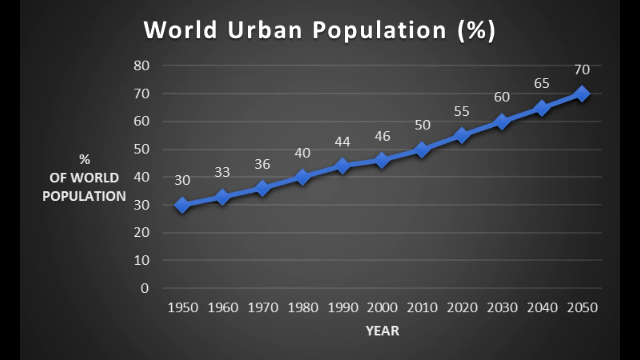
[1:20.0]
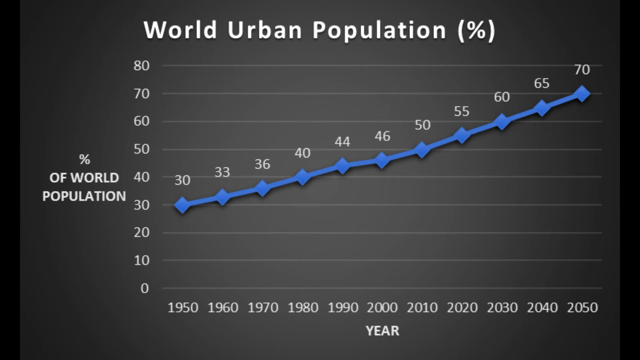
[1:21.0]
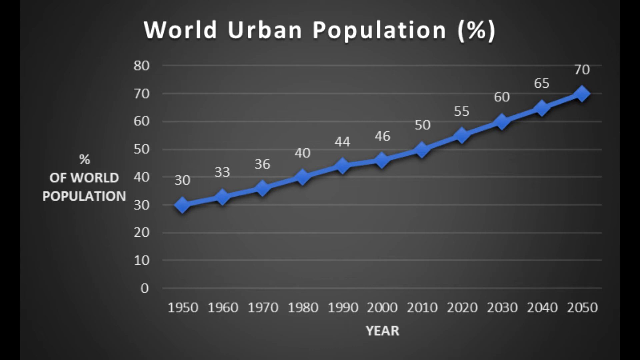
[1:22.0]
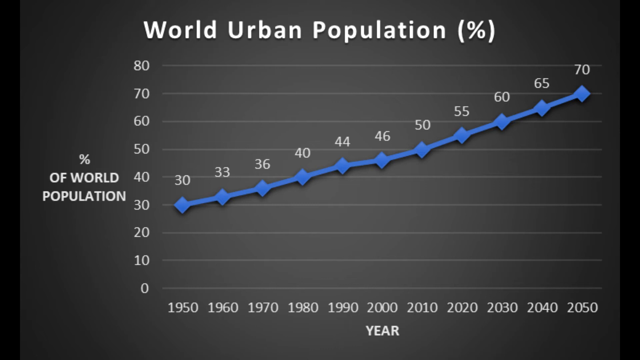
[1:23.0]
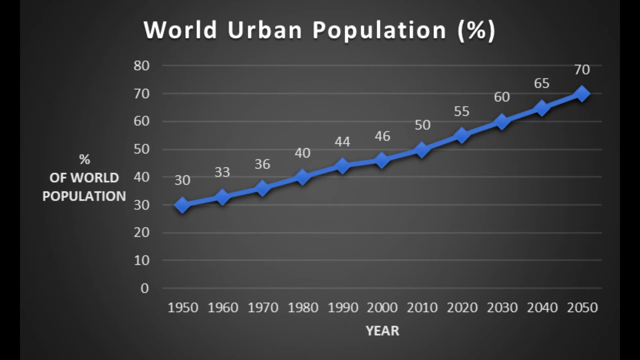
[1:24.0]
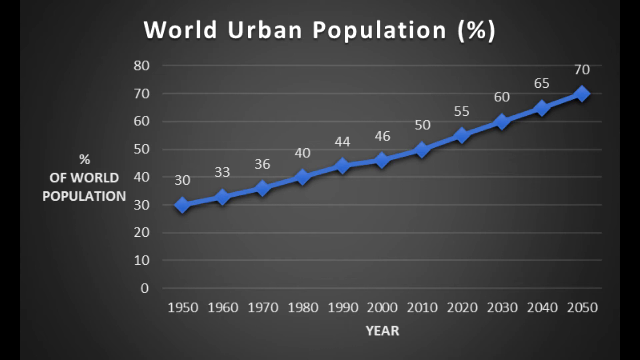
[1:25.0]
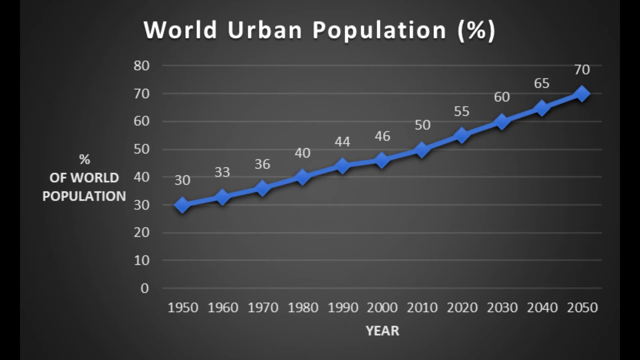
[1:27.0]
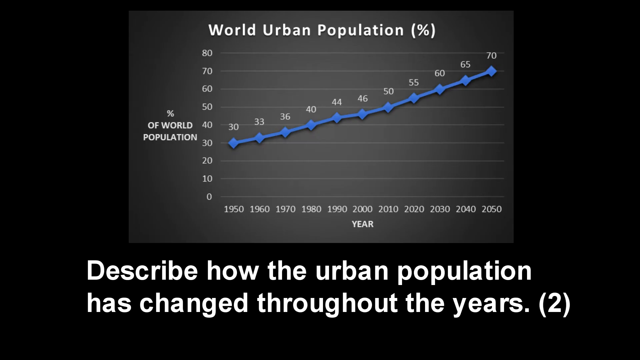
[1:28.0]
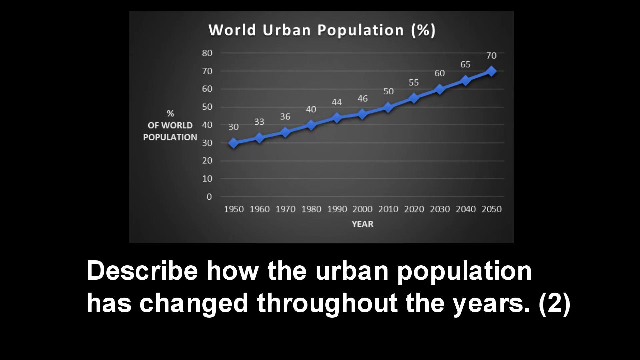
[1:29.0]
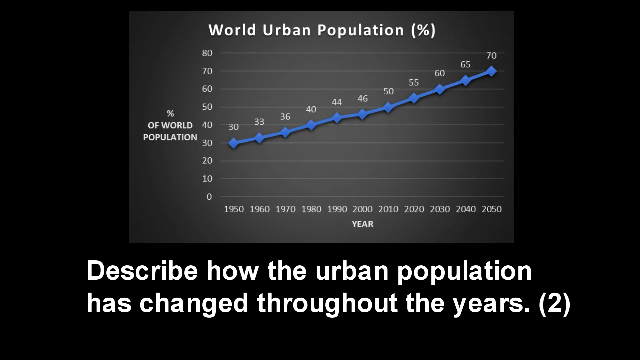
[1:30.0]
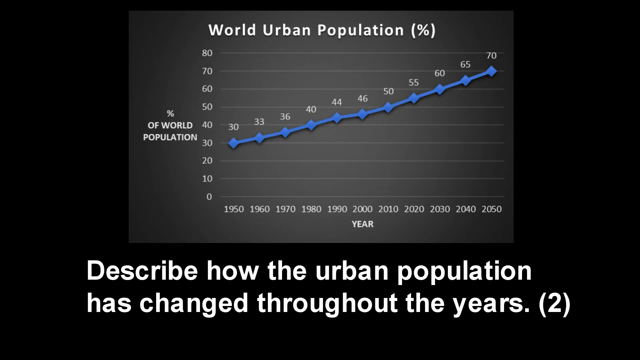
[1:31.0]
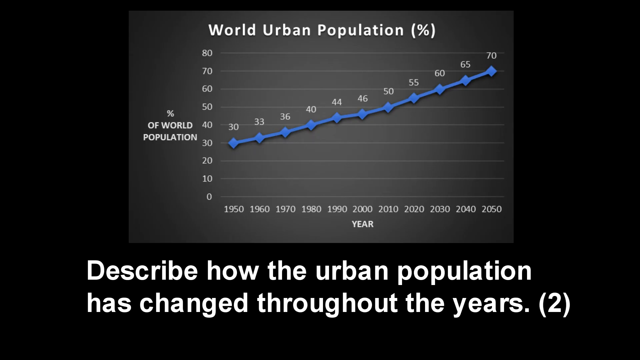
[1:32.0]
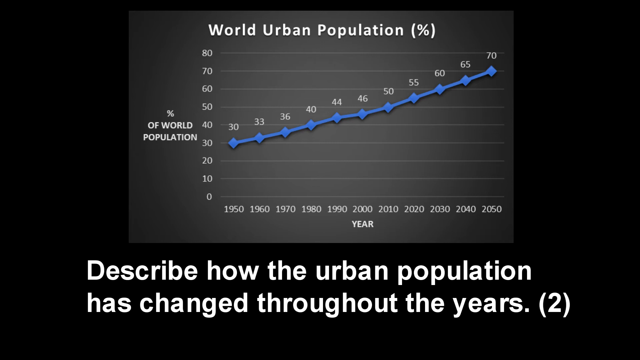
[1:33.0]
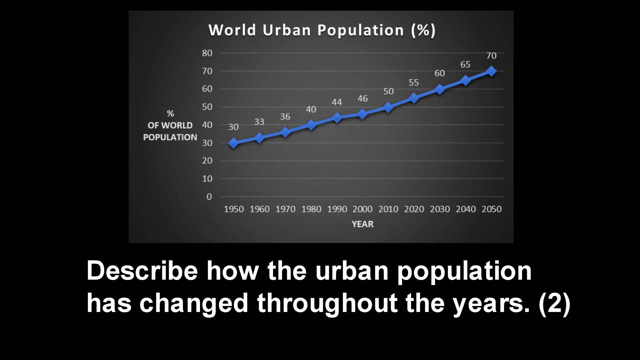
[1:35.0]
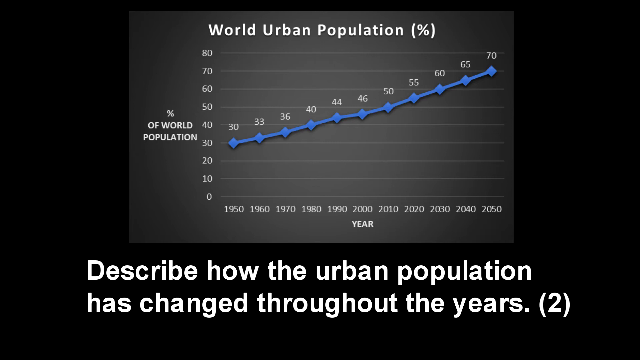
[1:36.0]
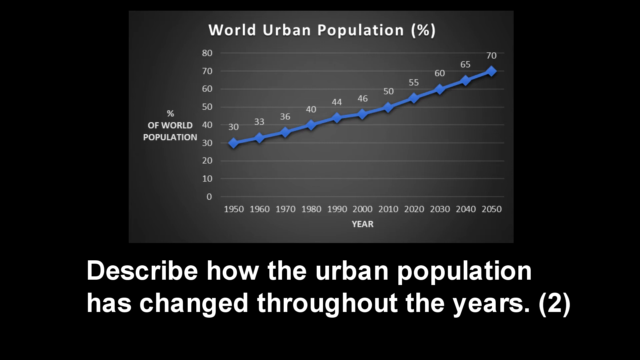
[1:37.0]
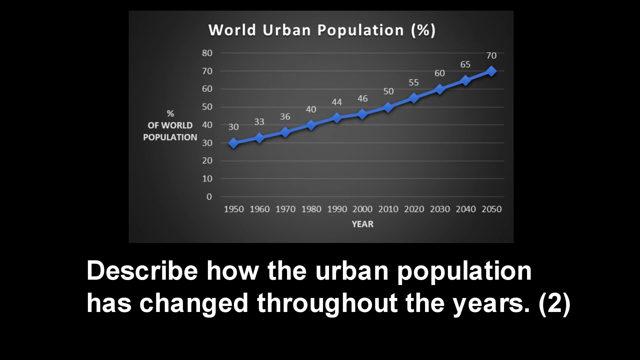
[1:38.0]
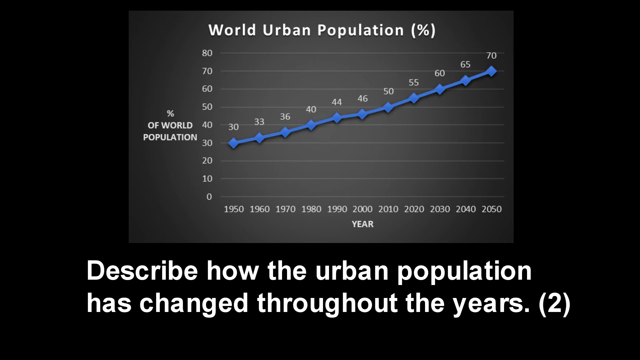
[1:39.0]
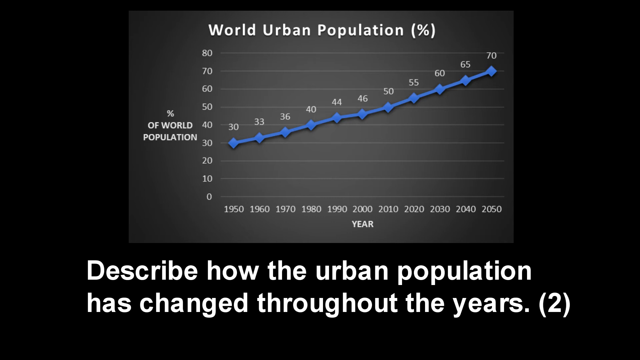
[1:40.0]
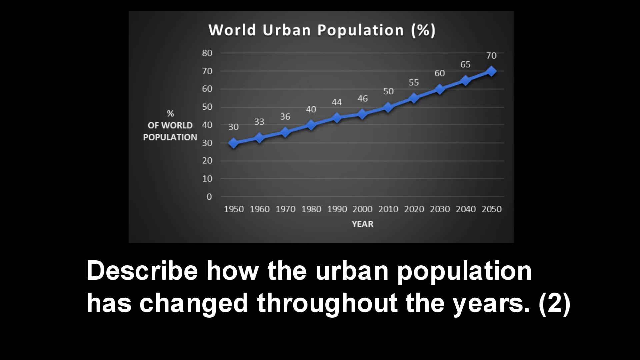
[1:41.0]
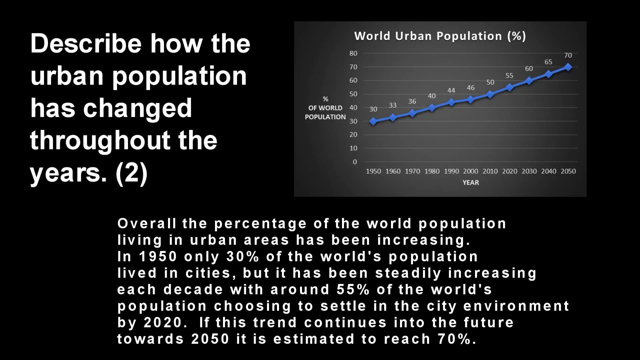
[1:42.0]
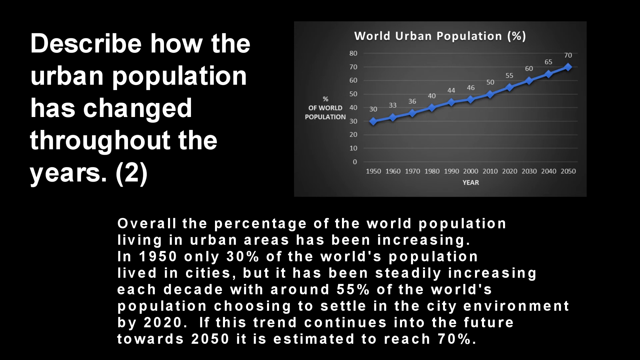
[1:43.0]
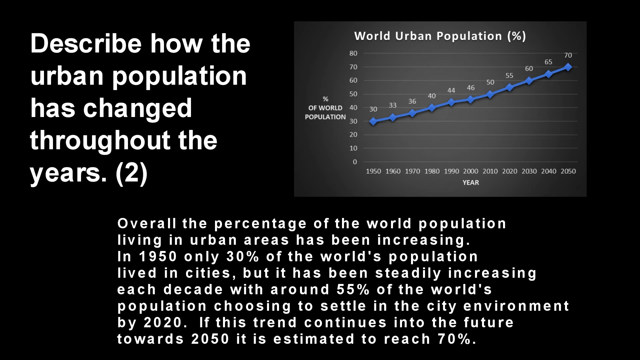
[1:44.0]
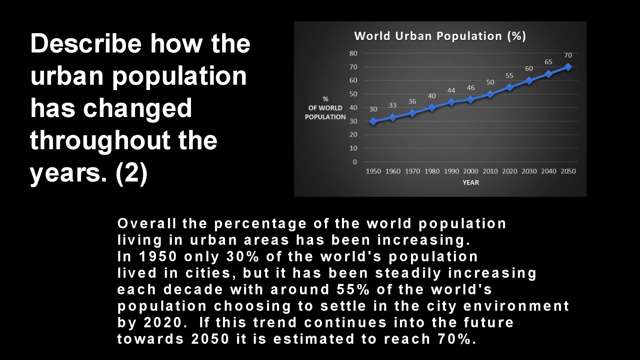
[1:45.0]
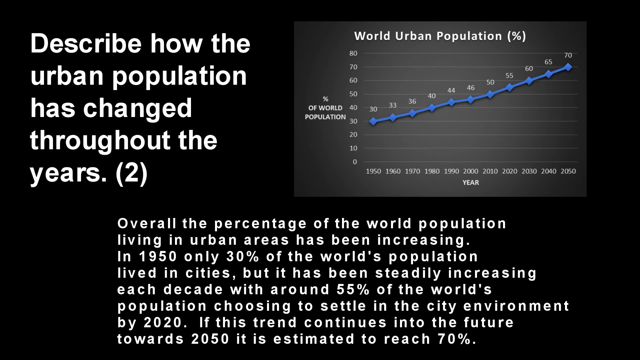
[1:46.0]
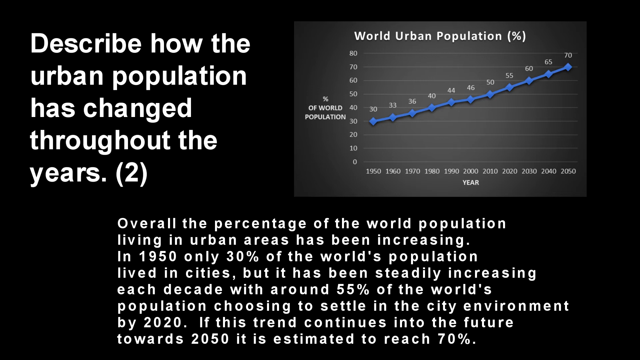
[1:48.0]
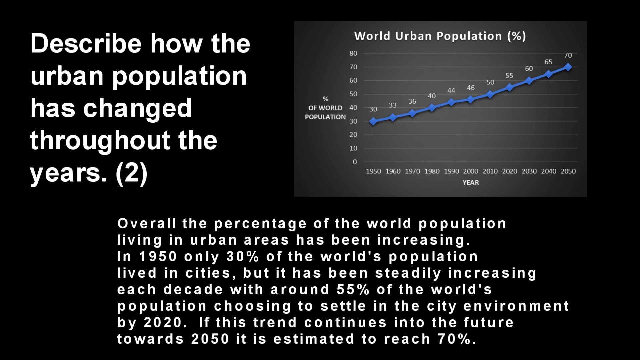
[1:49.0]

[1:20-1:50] The chart about world urban population remains on screen, along with a prompt to describe how the urban population has changed through the years, with growth shown apparently in 10-year increments. Text reads "Overall percentage of the world population living in urban areas has been increasing" and continues that "30 percent of the world's population lived in cities," that it "has been steadily increasing each decade," and "around 55 percent of the world's population in city environments by 2020."